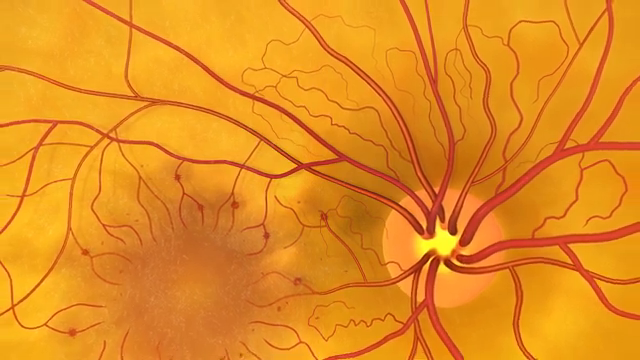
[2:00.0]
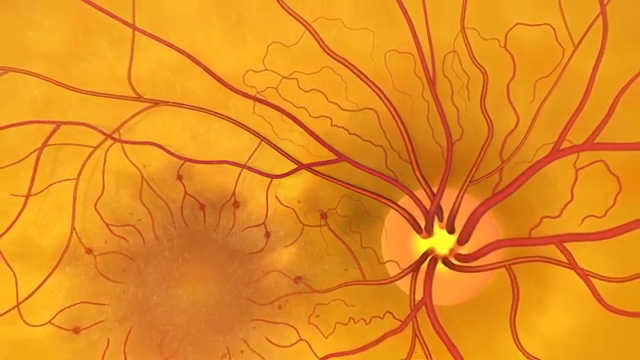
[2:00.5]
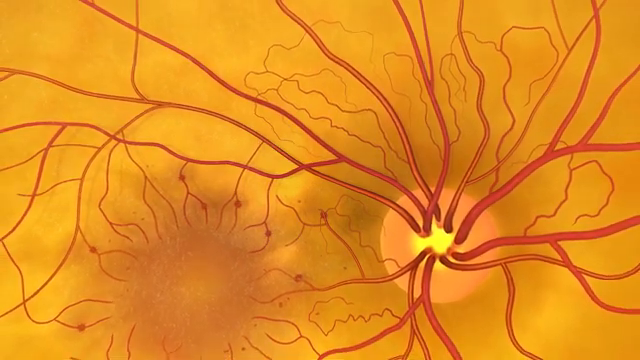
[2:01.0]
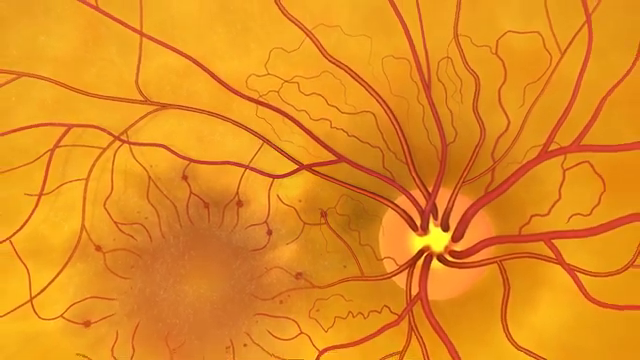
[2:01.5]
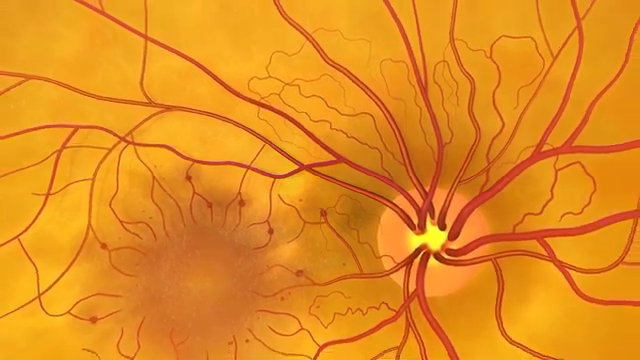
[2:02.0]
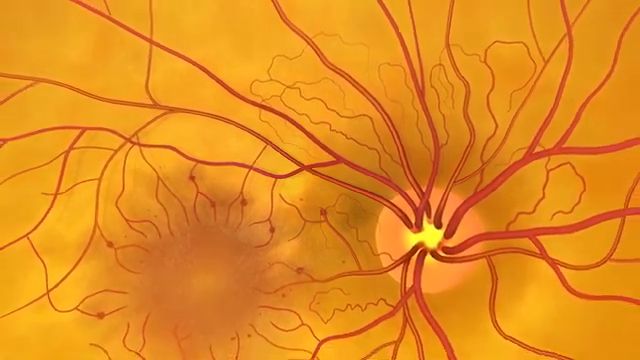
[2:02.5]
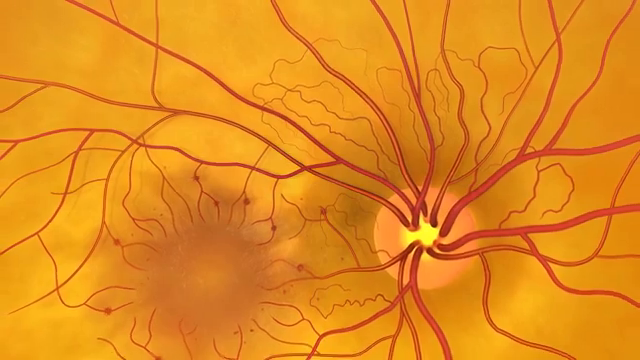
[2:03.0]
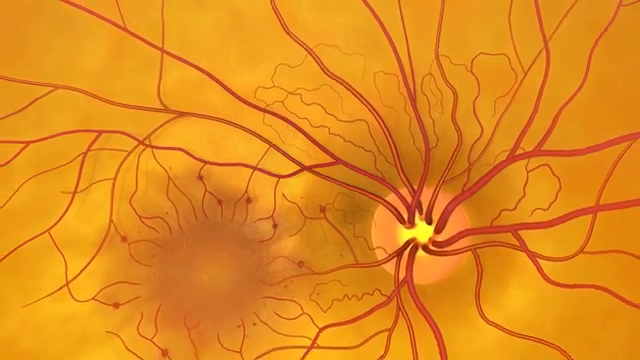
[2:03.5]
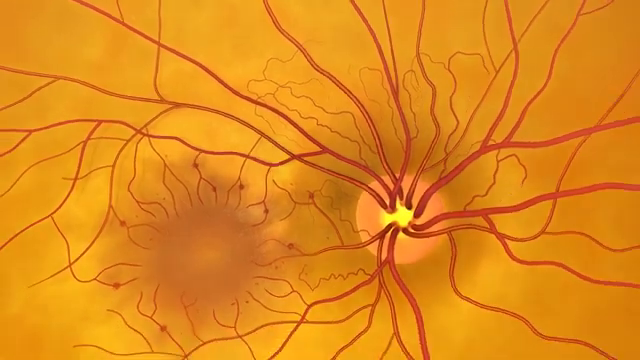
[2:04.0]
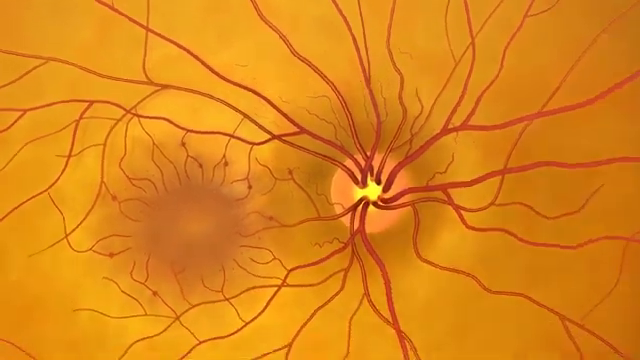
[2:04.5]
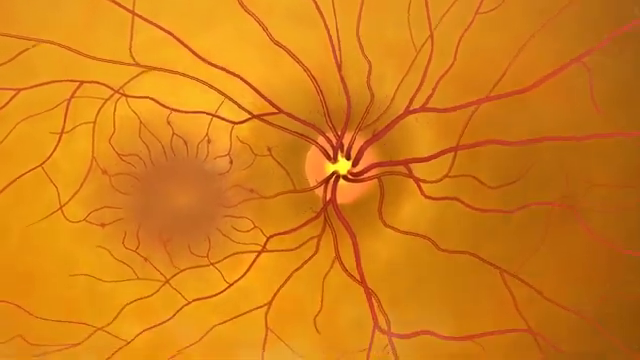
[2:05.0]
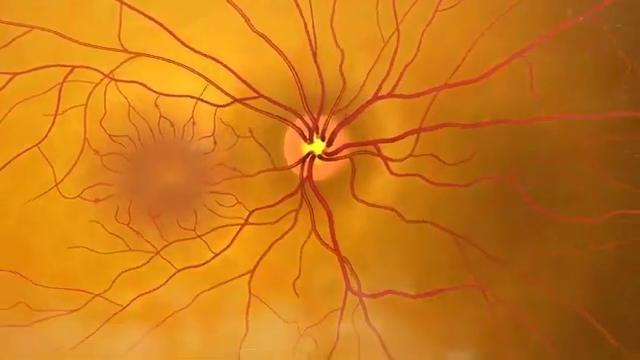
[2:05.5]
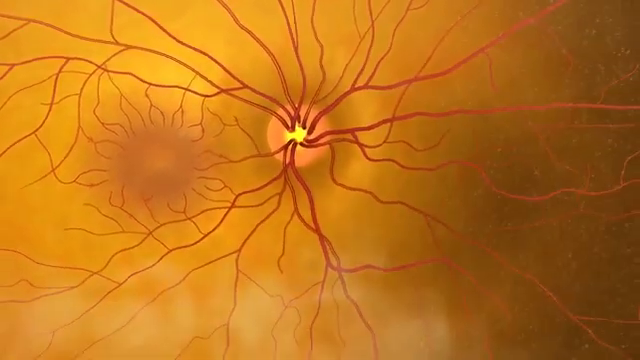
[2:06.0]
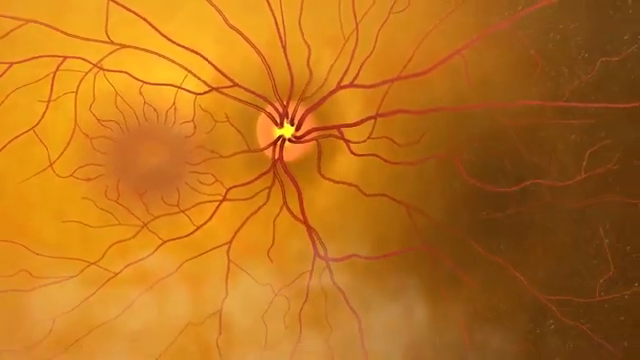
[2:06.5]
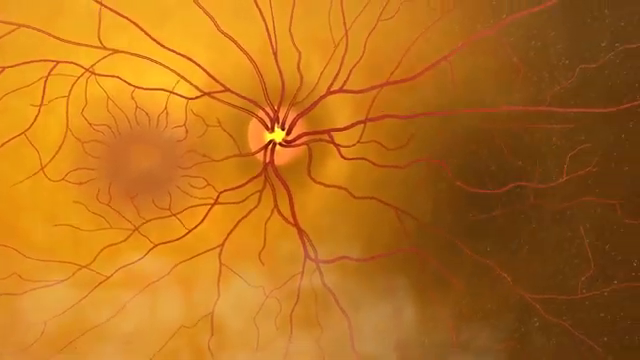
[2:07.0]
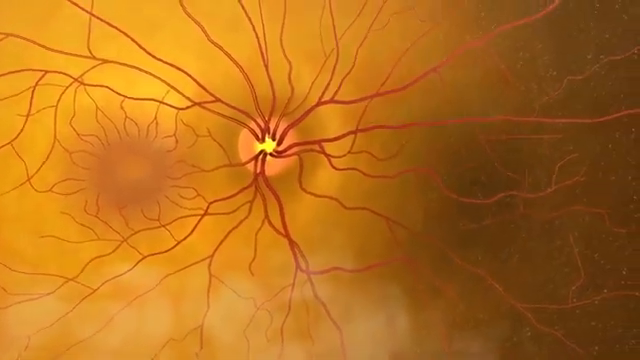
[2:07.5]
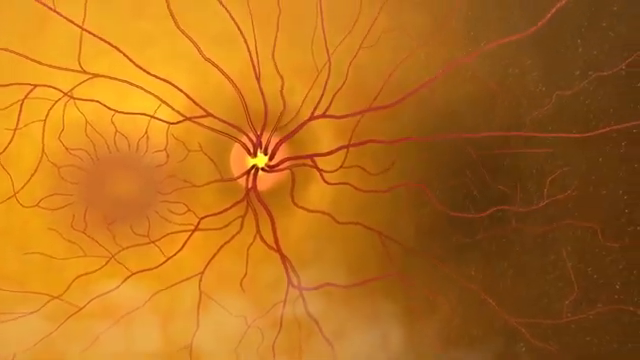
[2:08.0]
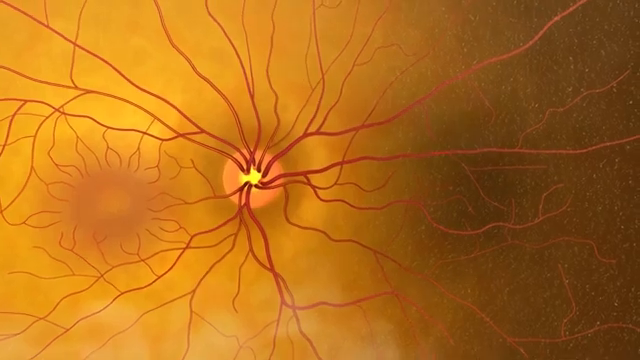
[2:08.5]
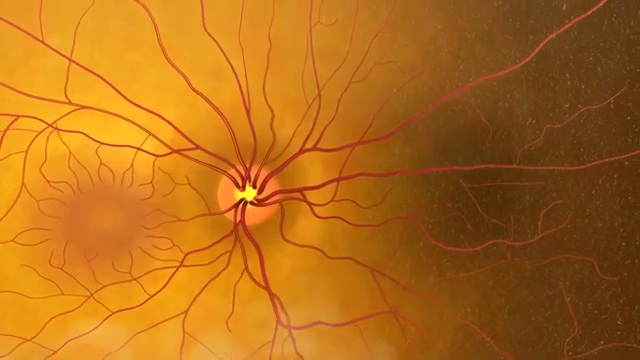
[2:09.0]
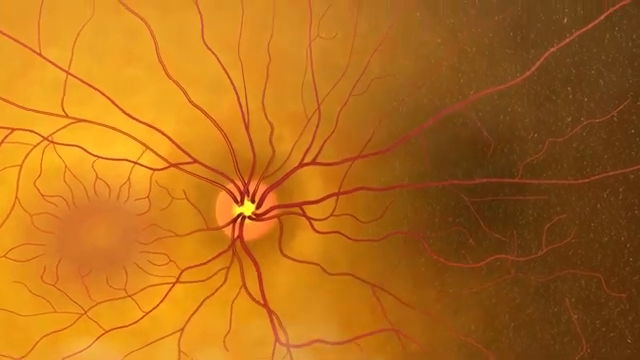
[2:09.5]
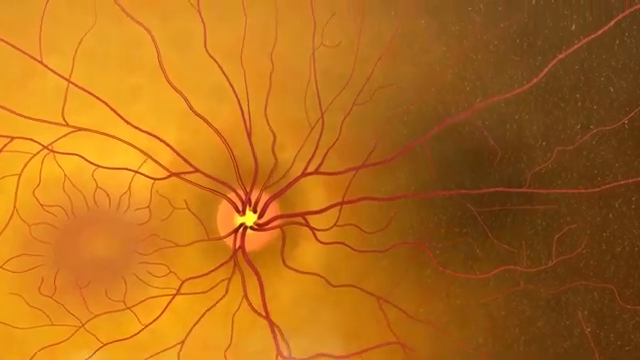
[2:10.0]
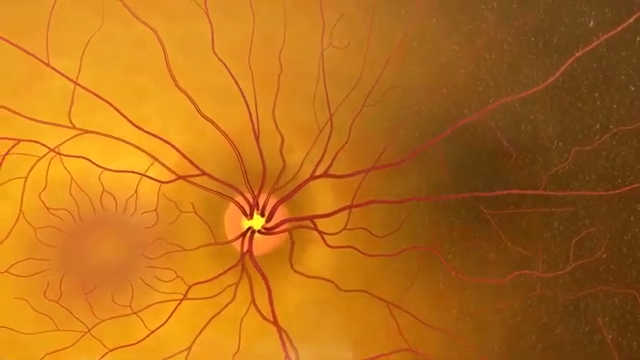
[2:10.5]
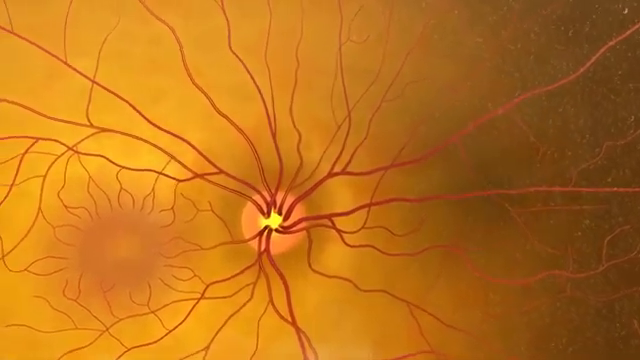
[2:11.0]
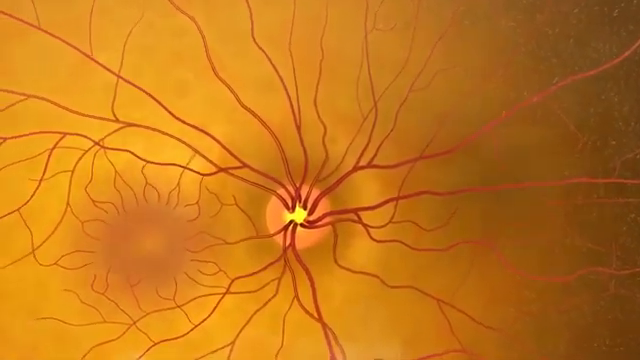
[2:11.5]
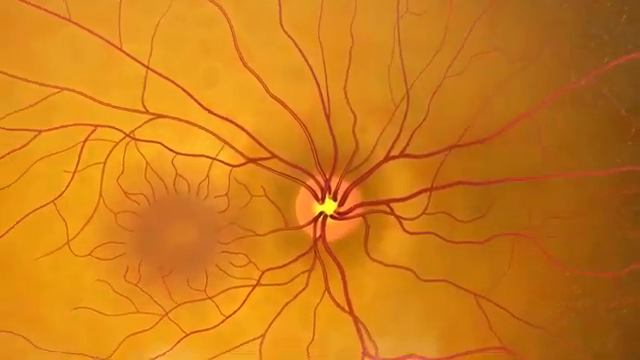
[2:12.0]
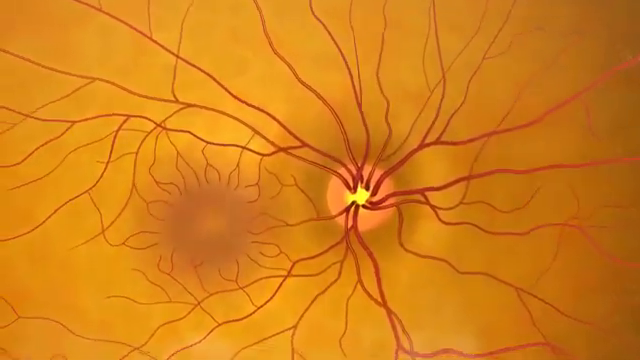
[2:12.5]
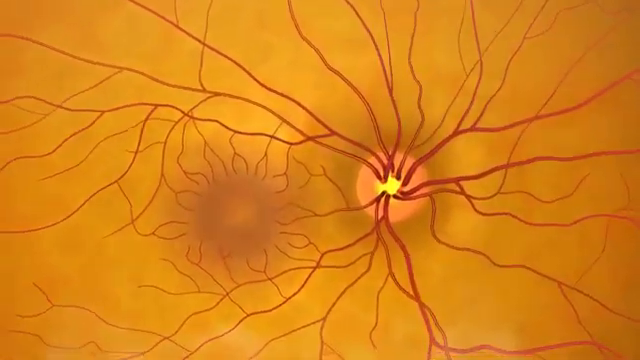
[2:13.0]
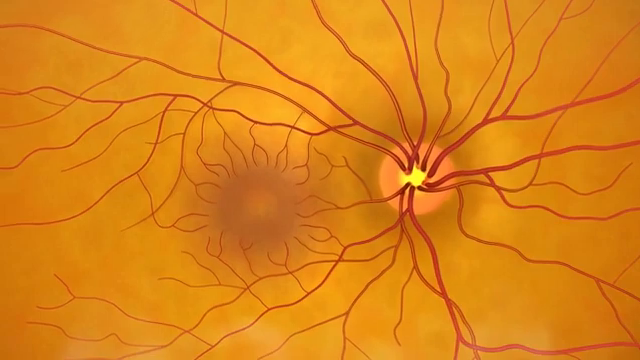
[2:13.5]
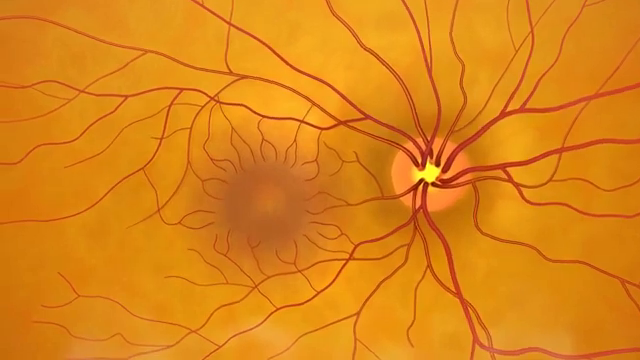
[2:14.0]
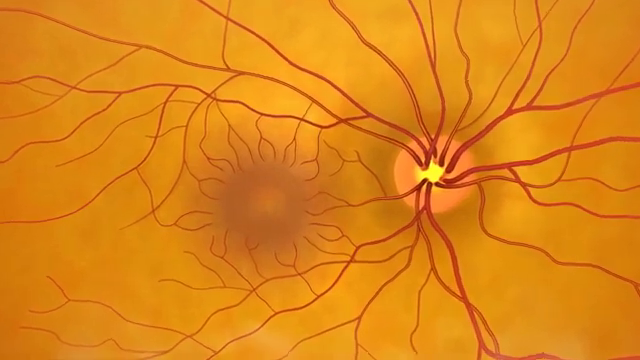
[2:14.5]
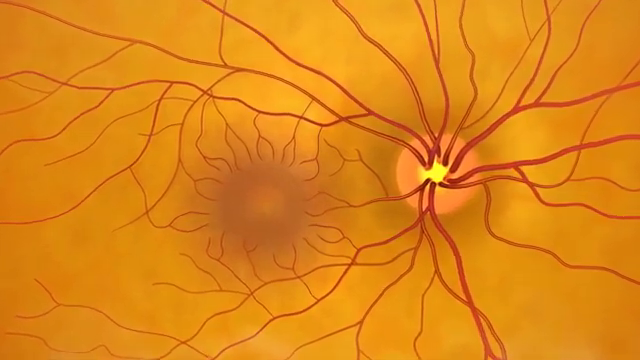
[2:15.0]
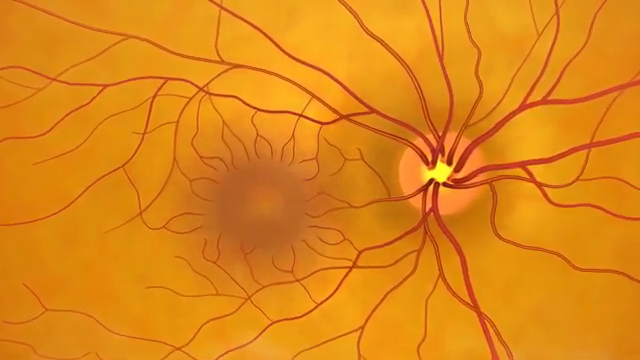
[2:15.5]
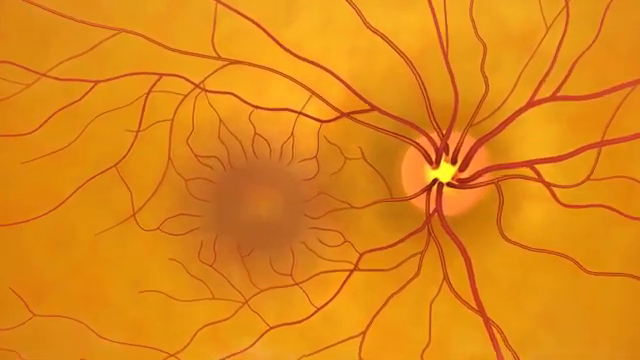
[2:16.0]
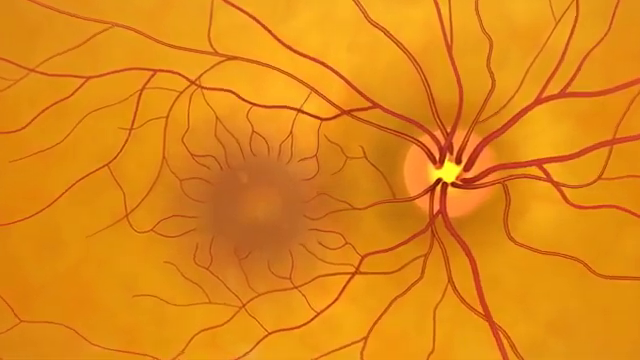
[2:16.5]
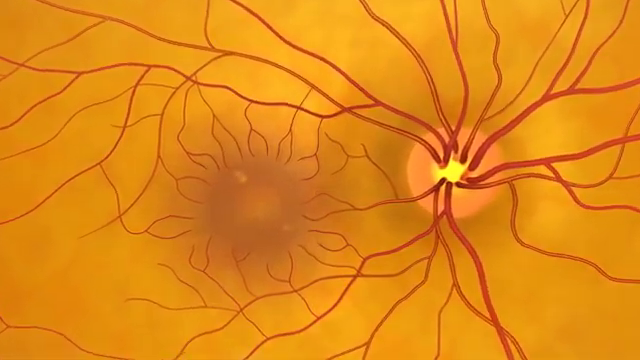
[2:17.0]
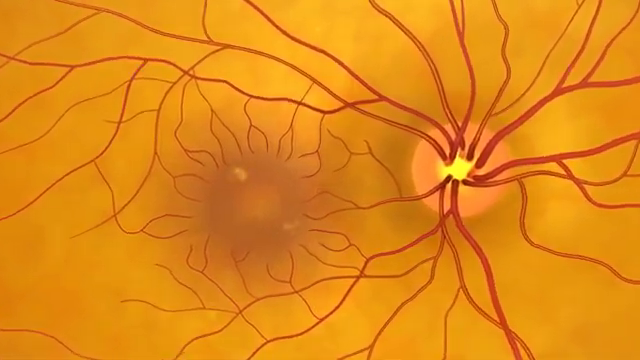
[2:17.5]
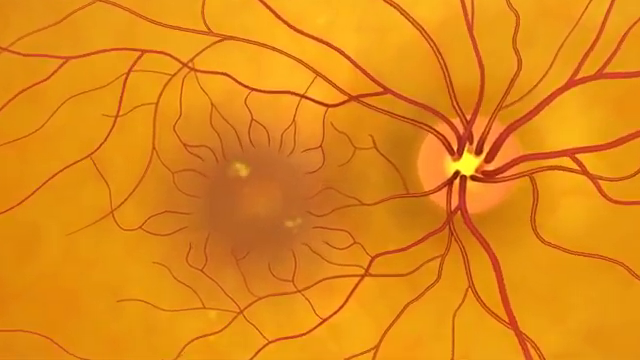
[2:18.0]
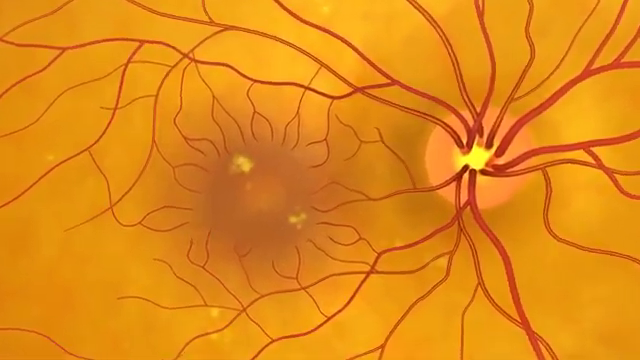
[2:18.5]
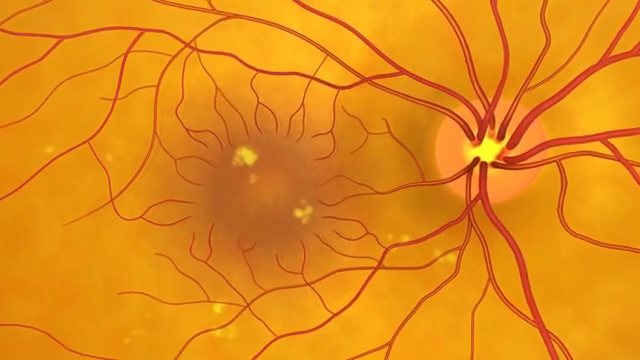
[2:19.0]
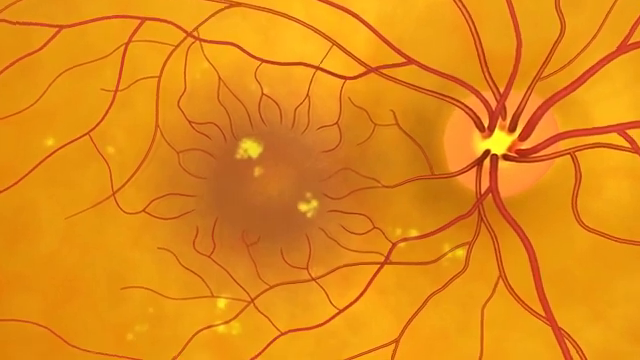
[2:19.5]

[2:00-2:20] Apparently a 3D animation shows a bunch of blood vessels. A big flashing yellow blob sits in the middle, surrounded by a circular area of very light red, and the blood vessels exit this flashing yellow blob. The macula is off to the left, a dark and dense area of coloration with red coloration extending into the background, with many blood vessels and tiny structures going into it.